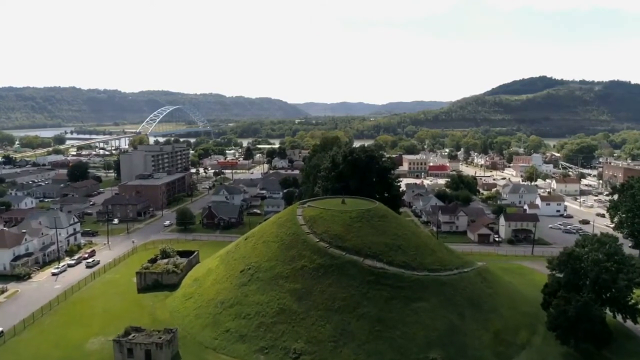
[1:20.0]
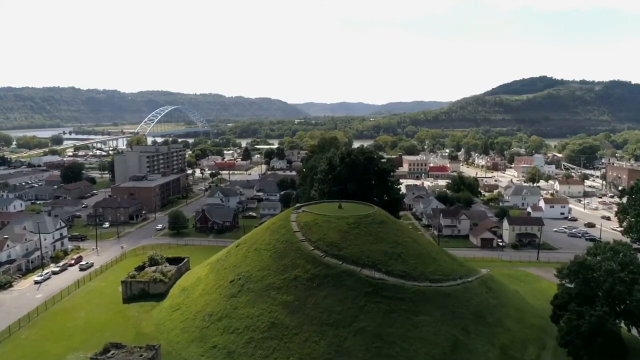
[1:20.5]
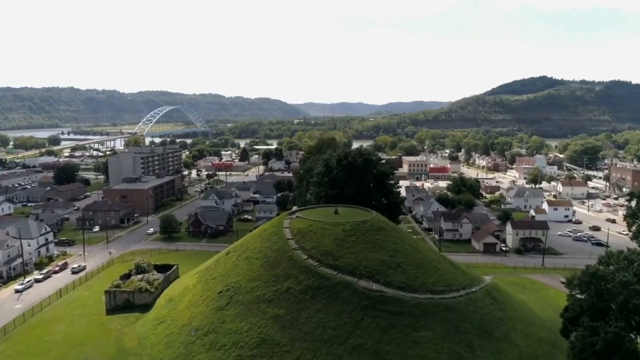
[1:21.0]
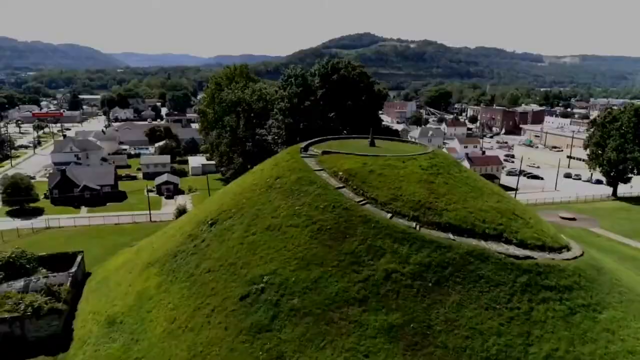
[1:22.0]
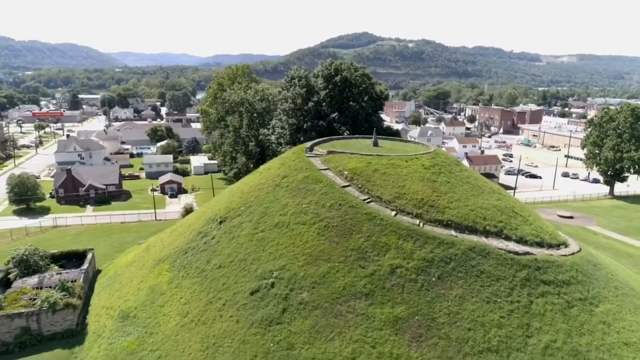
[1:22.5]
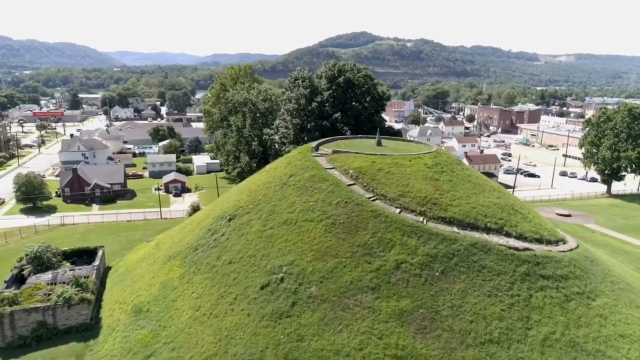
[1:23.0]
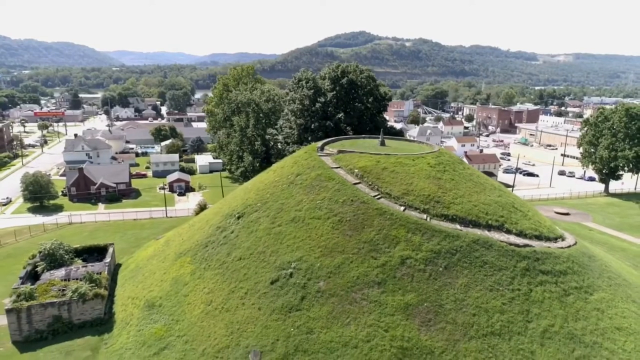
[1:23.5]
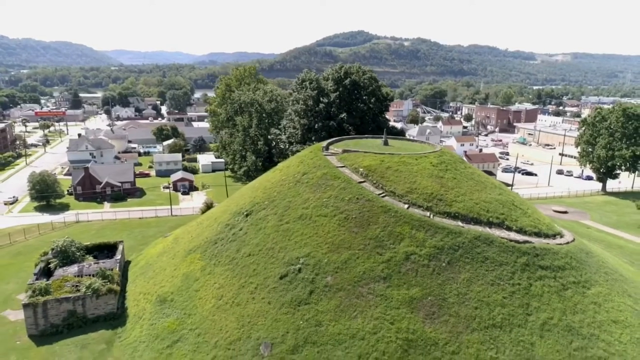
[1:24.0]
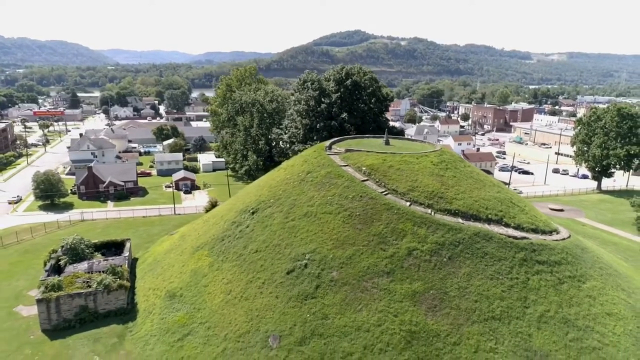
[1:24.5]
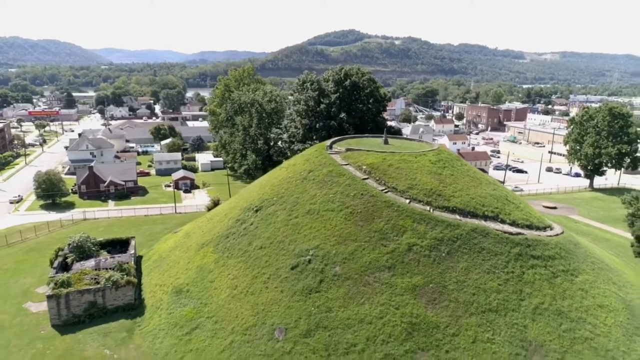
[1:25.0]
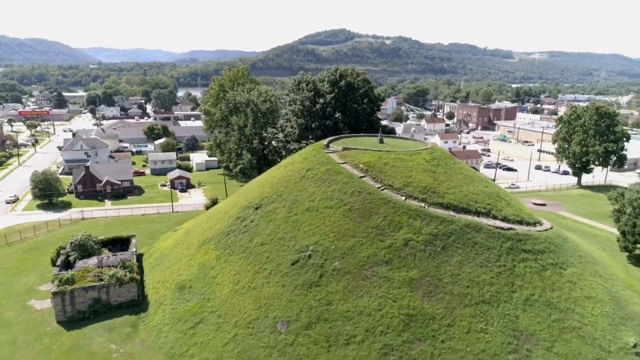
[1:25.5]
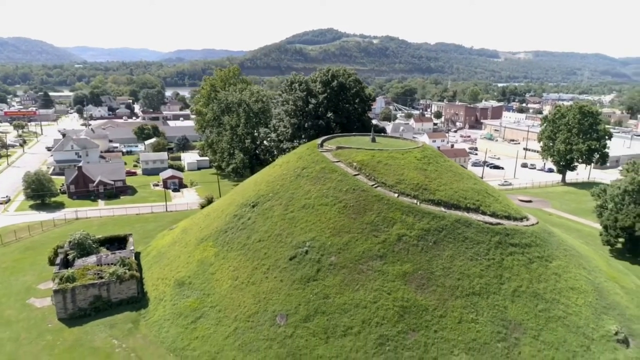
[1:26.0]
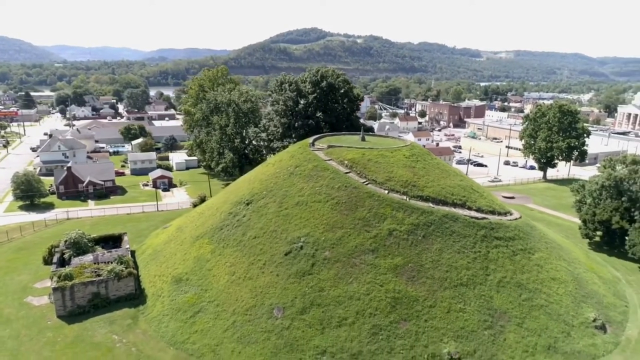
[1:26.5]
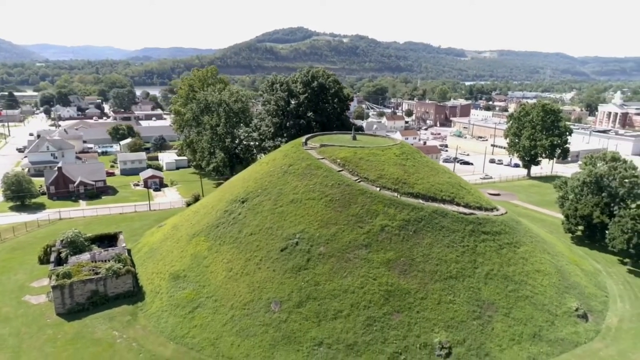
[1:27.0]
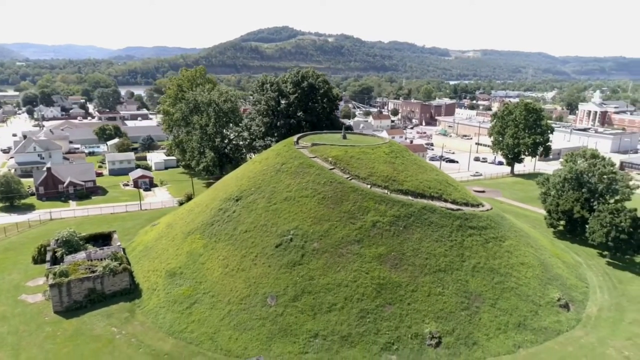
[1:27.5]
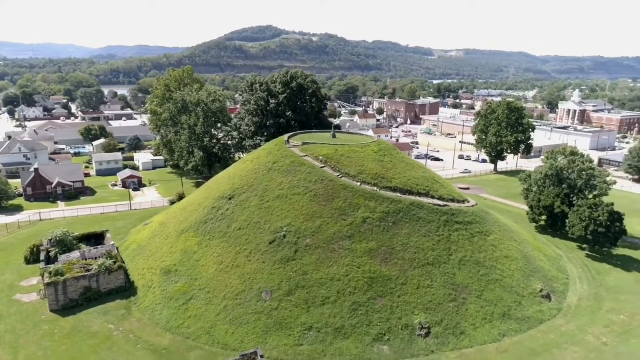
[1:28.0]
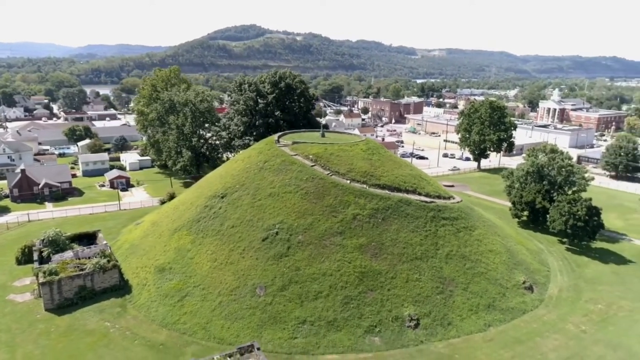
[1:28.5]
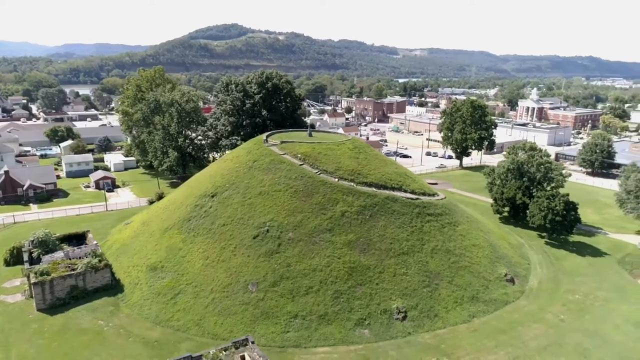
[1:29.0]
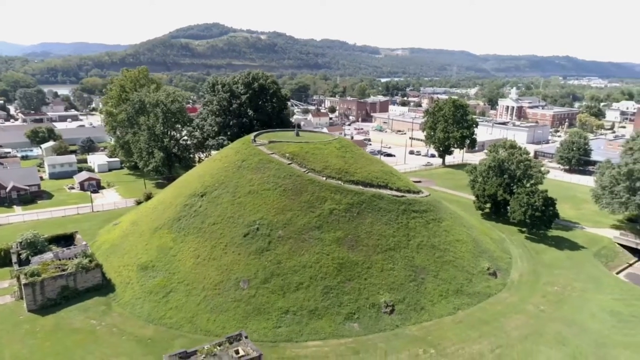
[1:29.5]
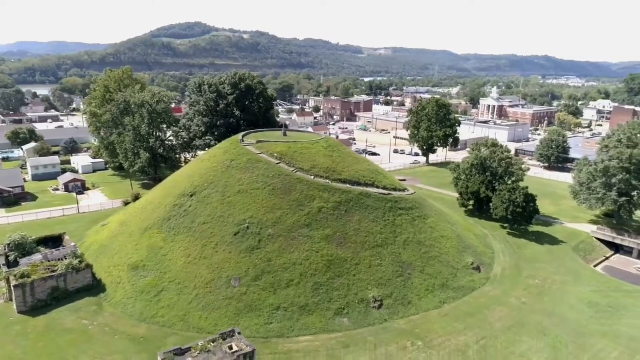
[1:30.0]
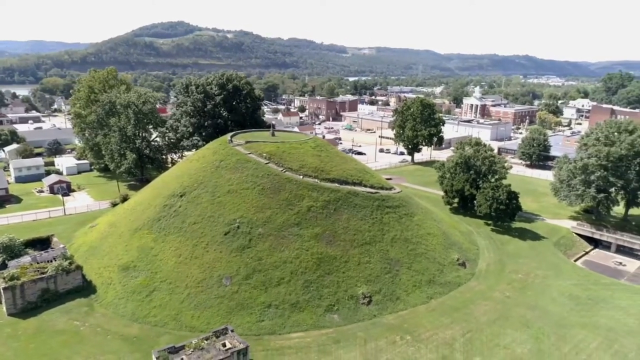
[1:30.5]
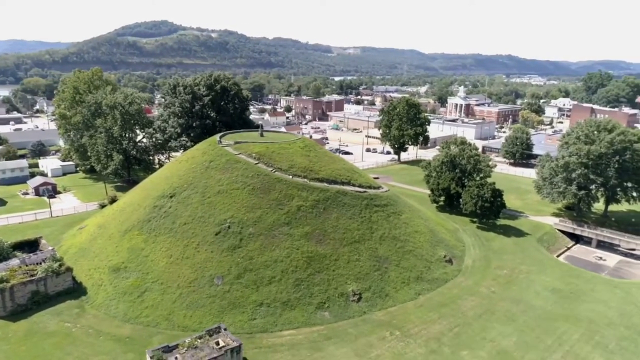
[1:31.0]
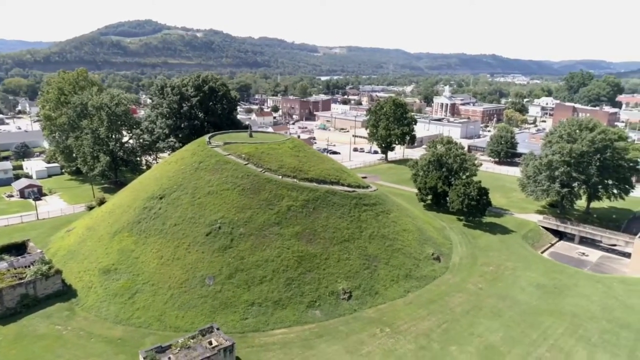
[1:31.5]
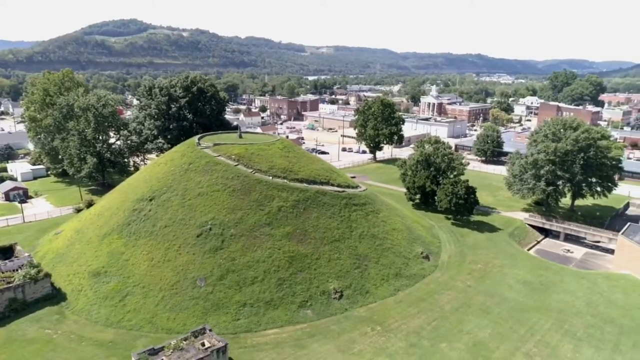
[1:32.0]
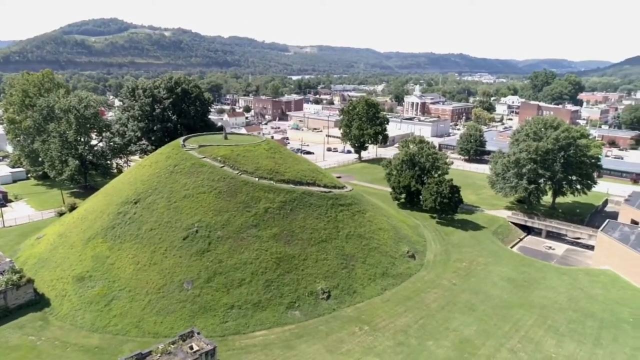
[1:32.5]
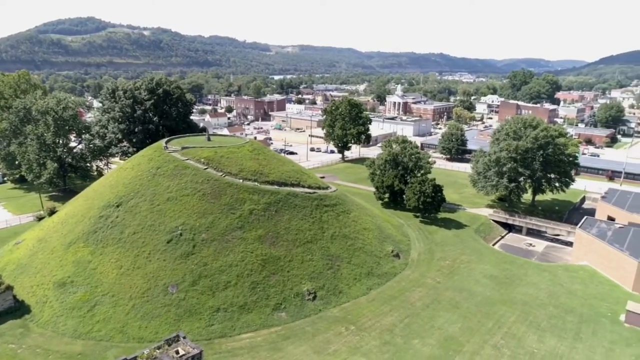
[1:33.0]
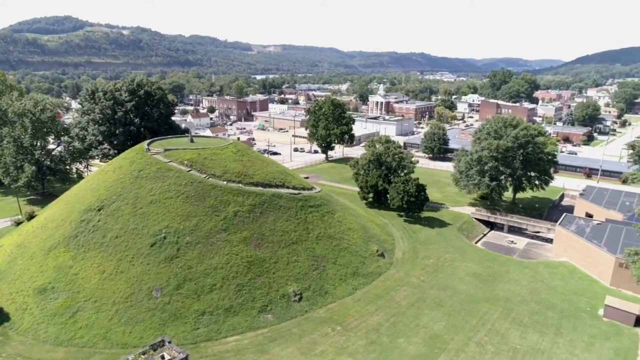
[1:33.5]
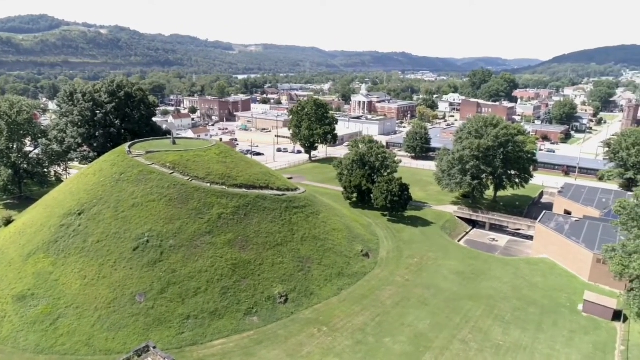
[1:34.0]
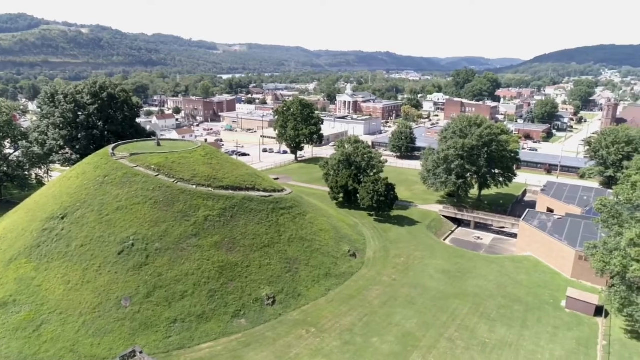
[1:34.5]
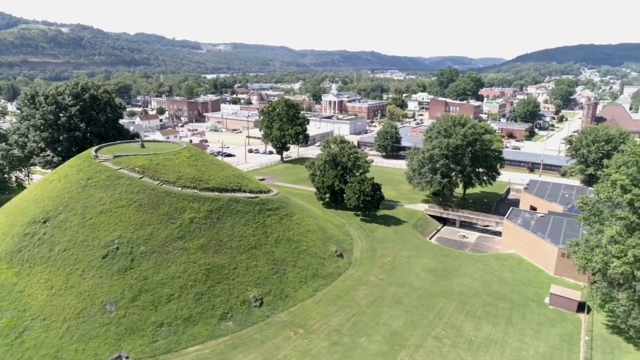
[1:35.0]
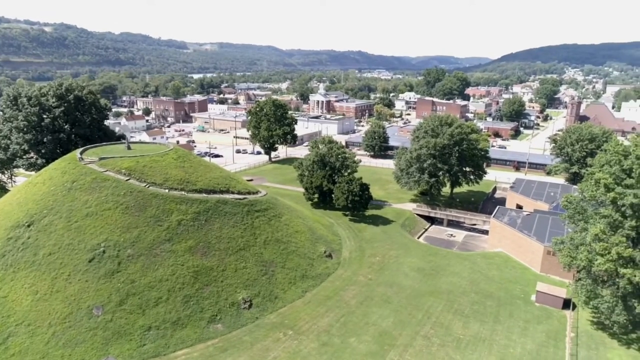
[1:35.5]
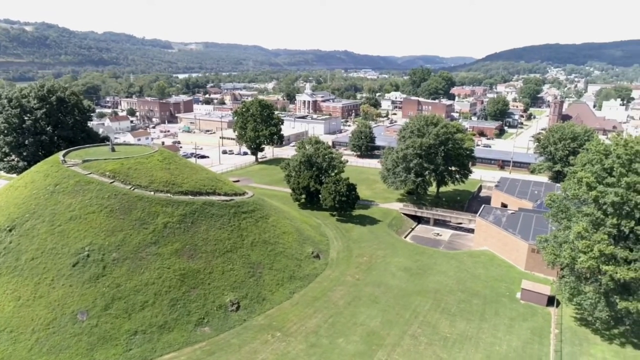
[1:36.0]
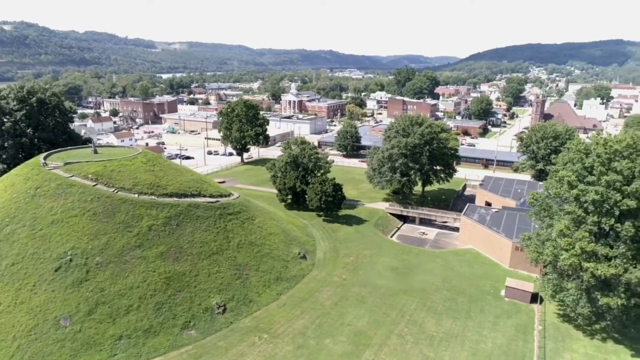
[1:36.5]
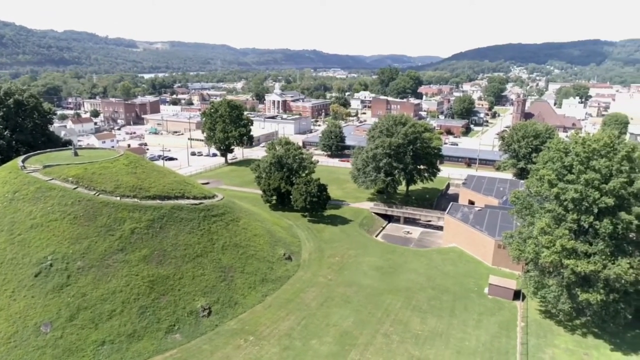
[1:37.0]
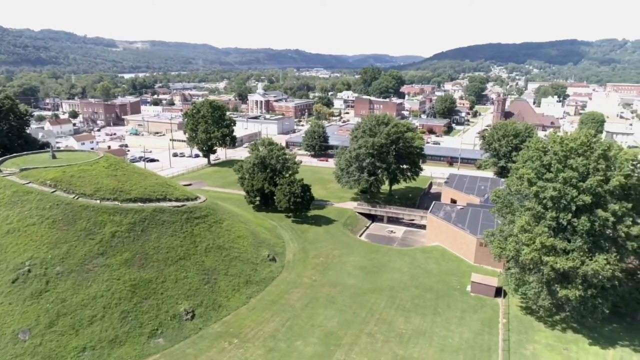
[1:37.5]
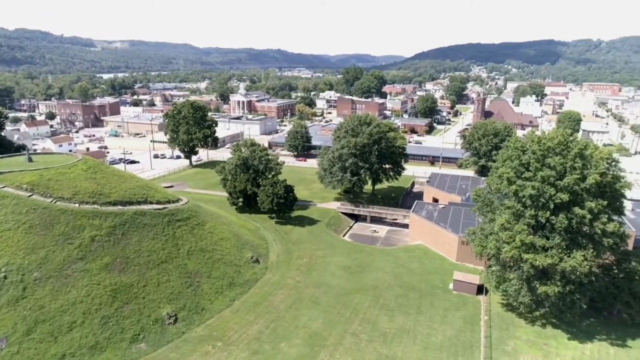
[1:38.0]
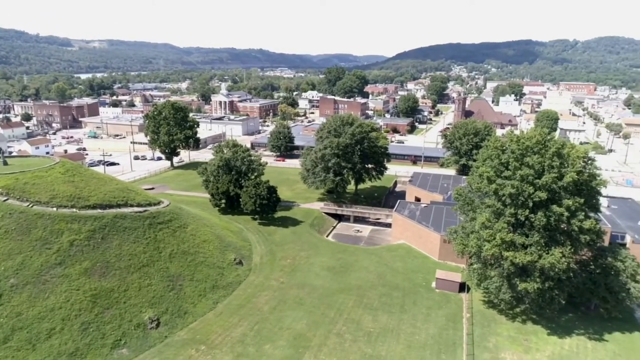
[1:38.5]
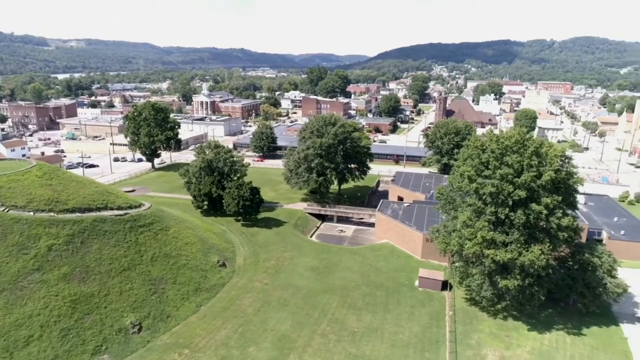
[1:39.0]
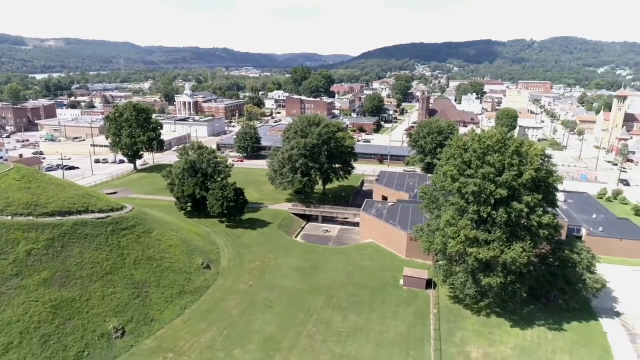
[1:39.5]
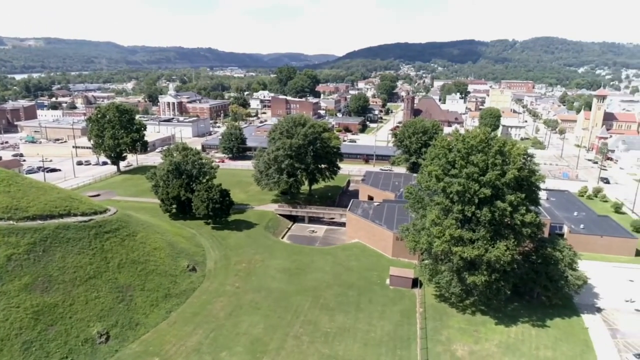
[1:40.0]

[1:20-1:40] An aerial drone view shows the area around the penitentiary building. There are roads and buildings, and among them is a giant square of grass with a giant grassy mound right in the middle. A stone path curls up and around the mound to the very top, where there is a monument. The drone passes over the top of the mound, showing it from different angles, then moves backwards, revealing a couple of what seem to be ruined buildings at its base. The rest of the area is very tidy: the grass is very well maintained, the roads are clear and clean, and the buildings look very clean and well kept. In the background is a mountainous area, with mountains covered in bushes and trees, looking like giant green mountains. Cars drive along the road, and no people are visible walking up the grassy mound.